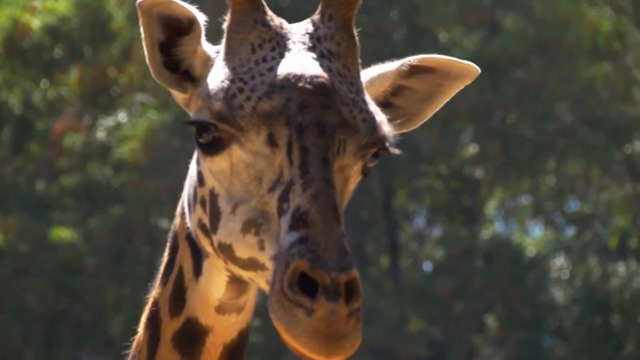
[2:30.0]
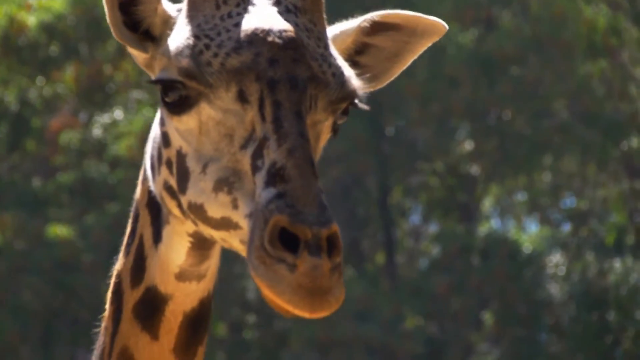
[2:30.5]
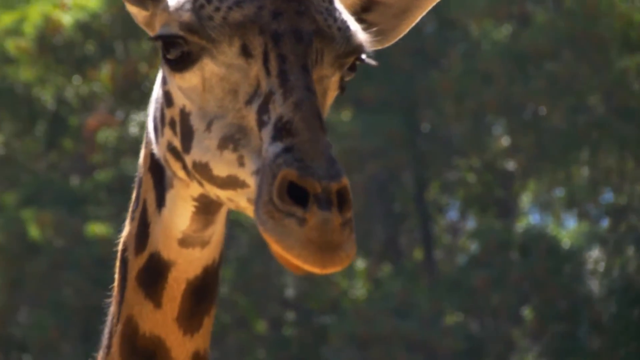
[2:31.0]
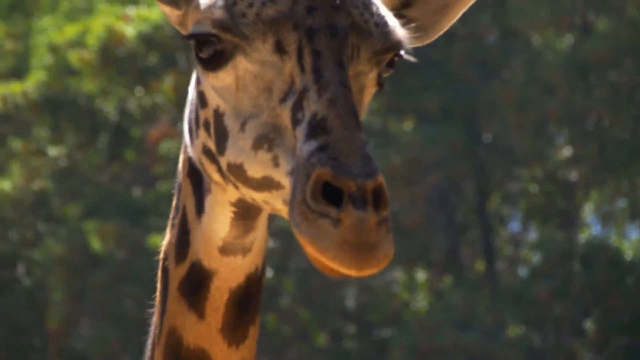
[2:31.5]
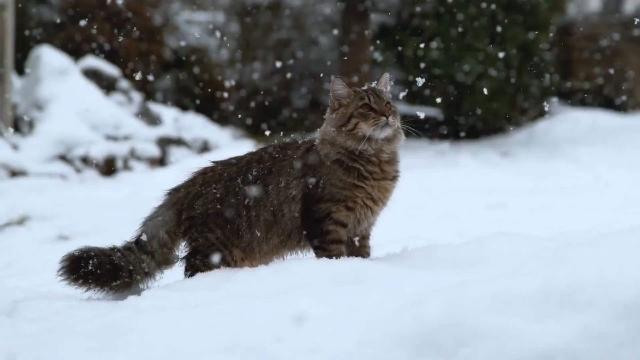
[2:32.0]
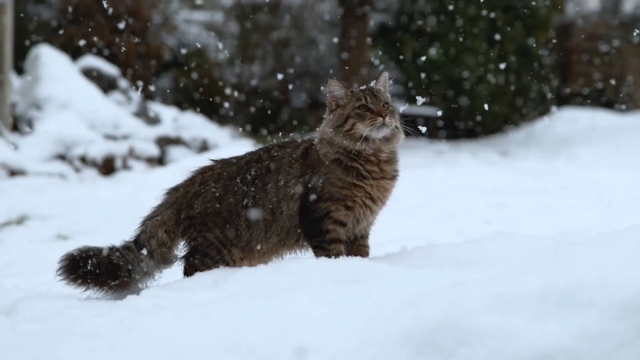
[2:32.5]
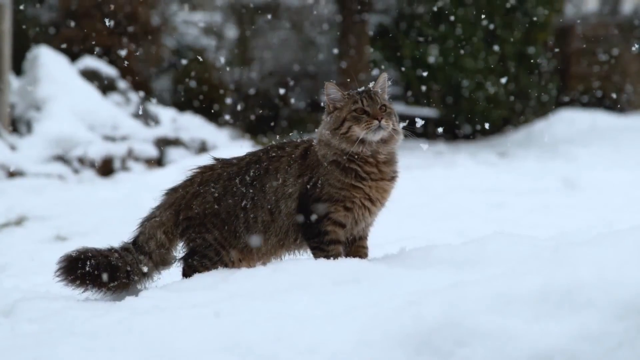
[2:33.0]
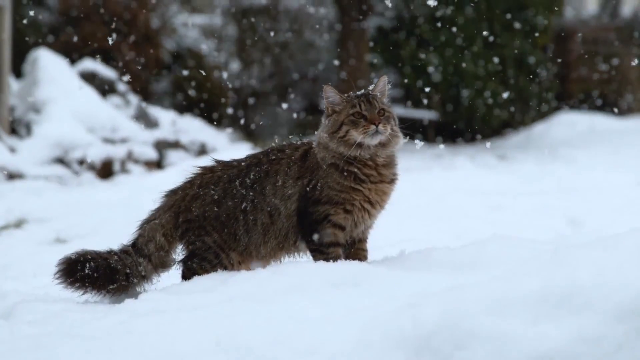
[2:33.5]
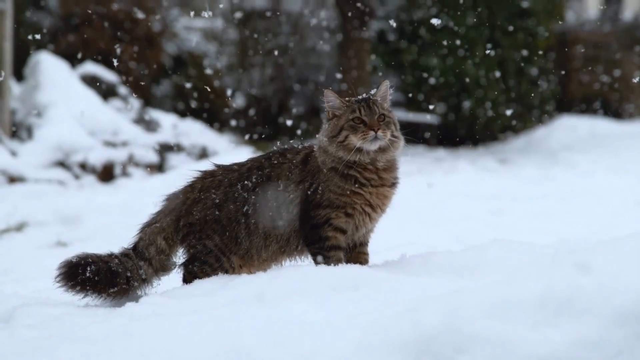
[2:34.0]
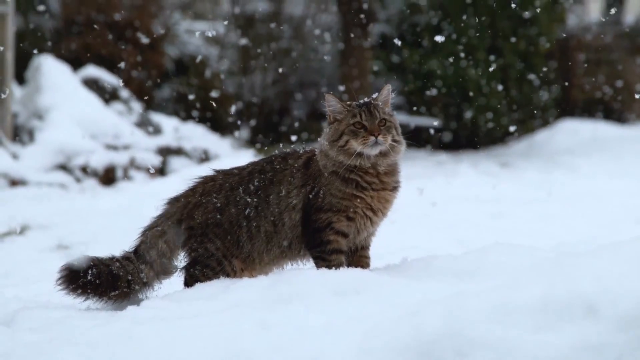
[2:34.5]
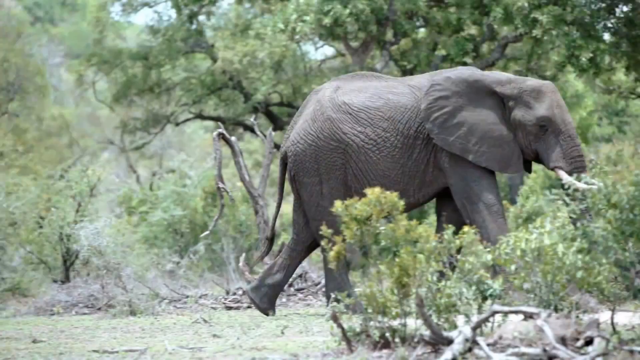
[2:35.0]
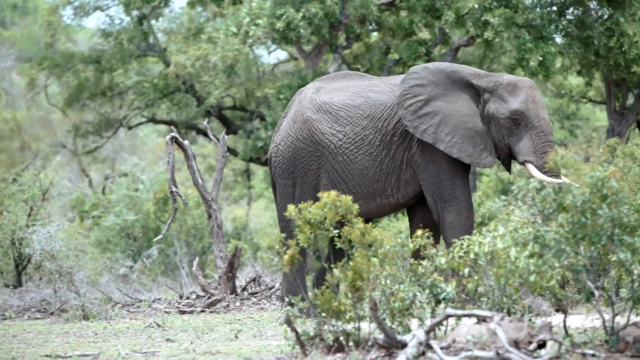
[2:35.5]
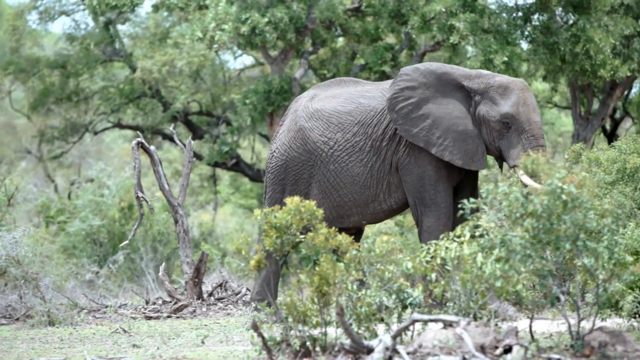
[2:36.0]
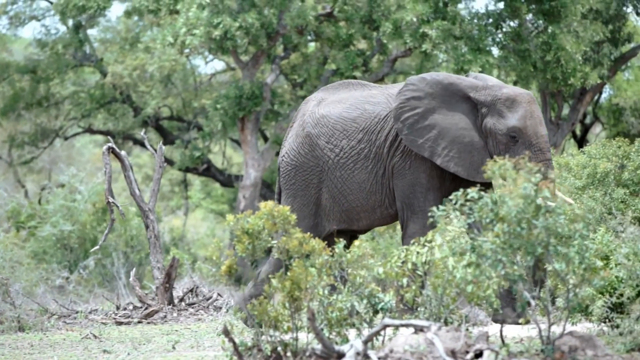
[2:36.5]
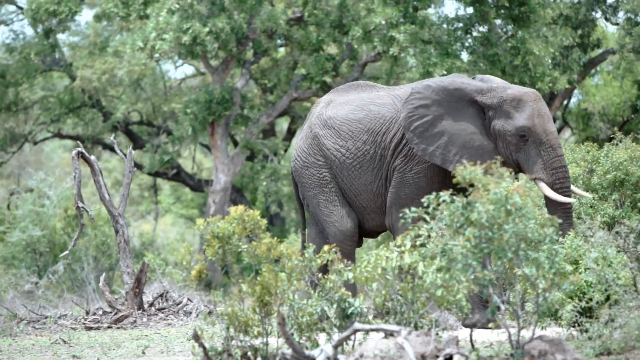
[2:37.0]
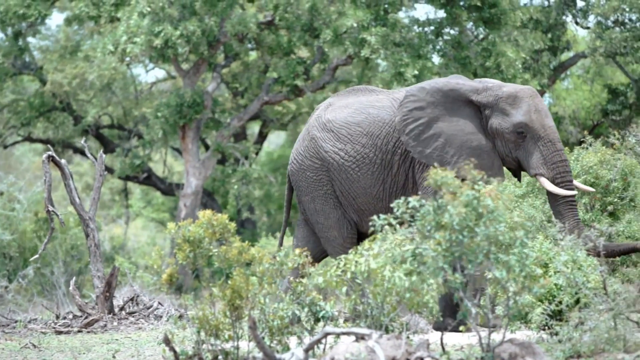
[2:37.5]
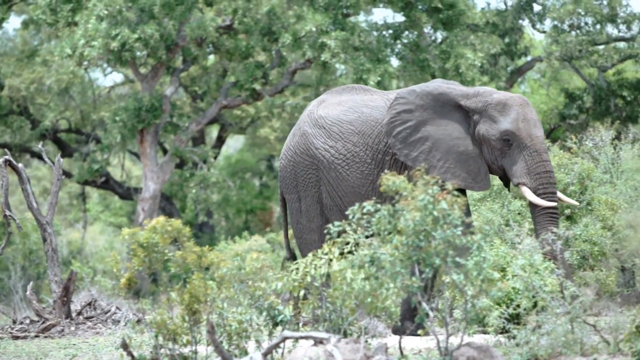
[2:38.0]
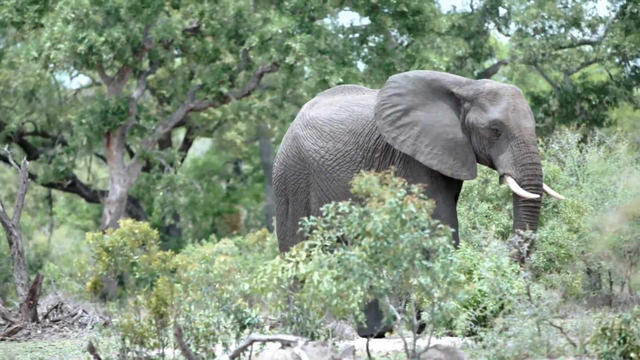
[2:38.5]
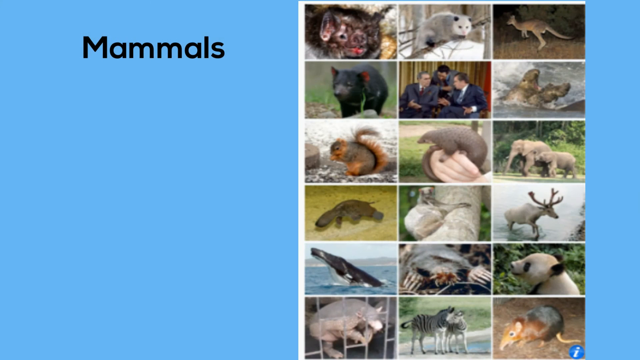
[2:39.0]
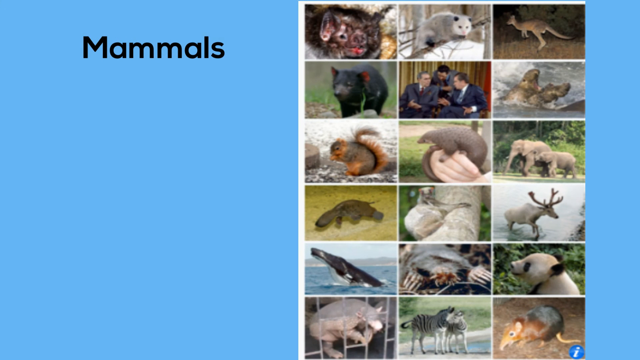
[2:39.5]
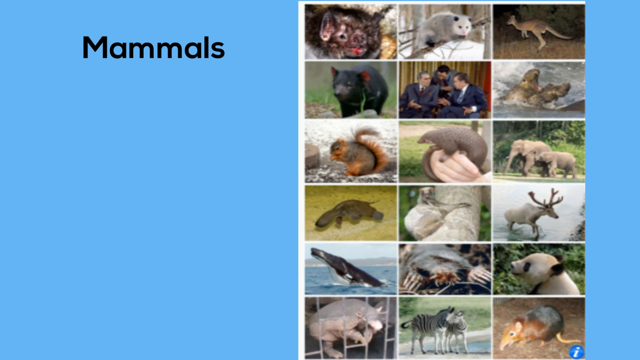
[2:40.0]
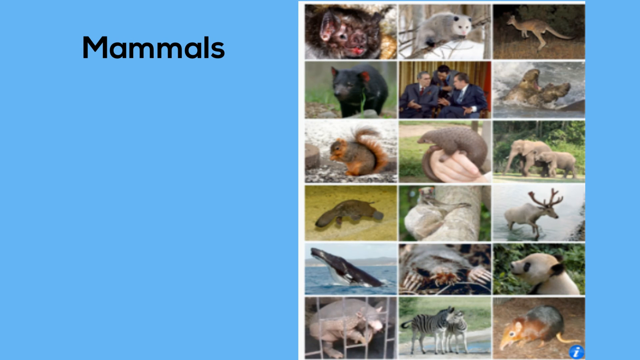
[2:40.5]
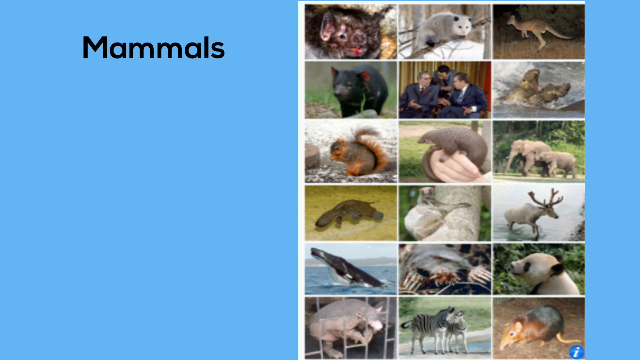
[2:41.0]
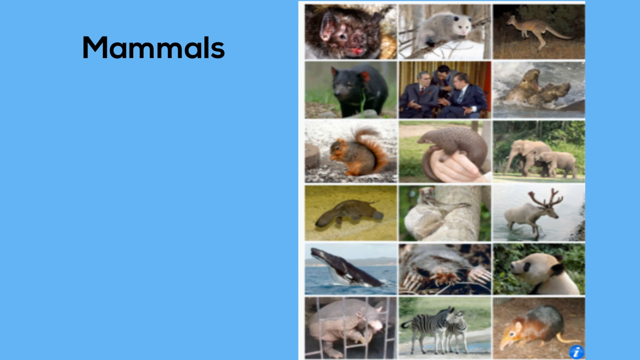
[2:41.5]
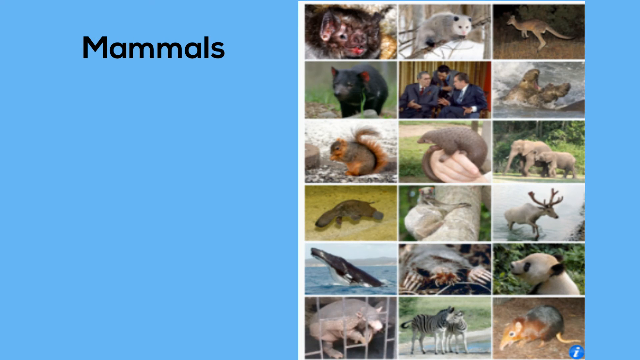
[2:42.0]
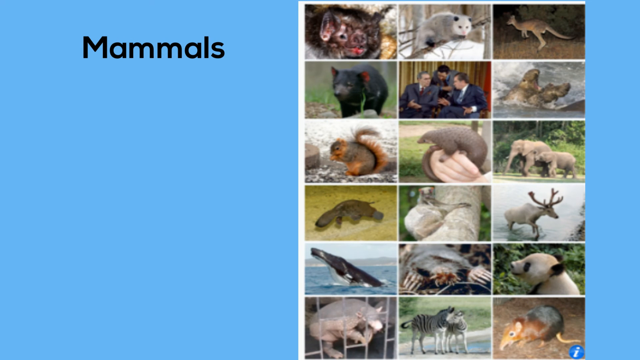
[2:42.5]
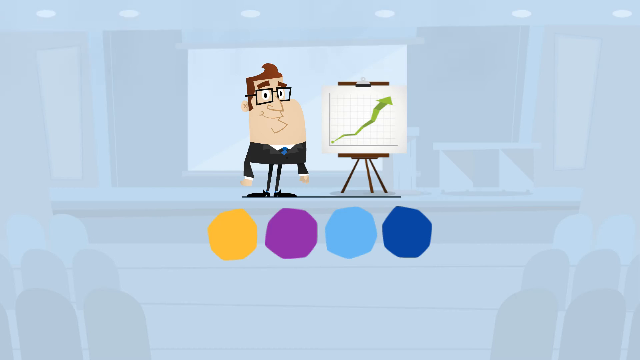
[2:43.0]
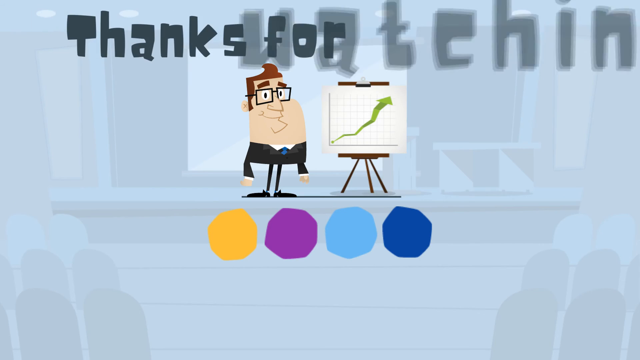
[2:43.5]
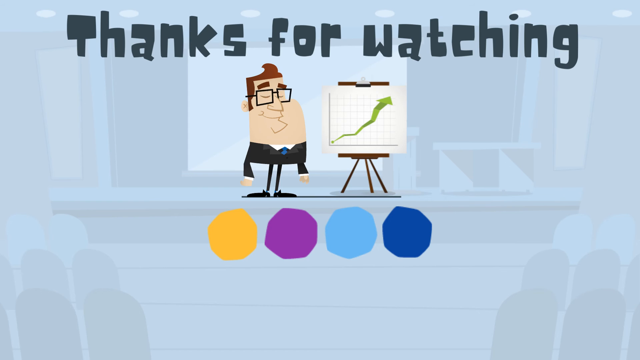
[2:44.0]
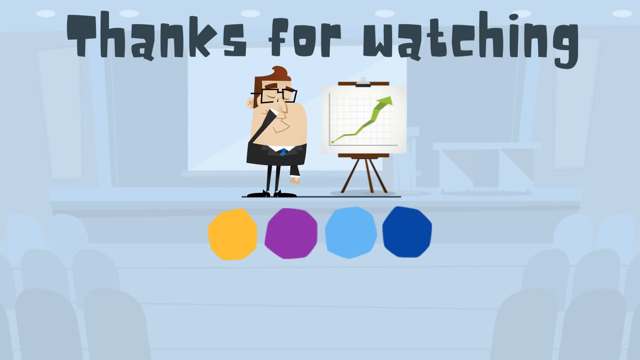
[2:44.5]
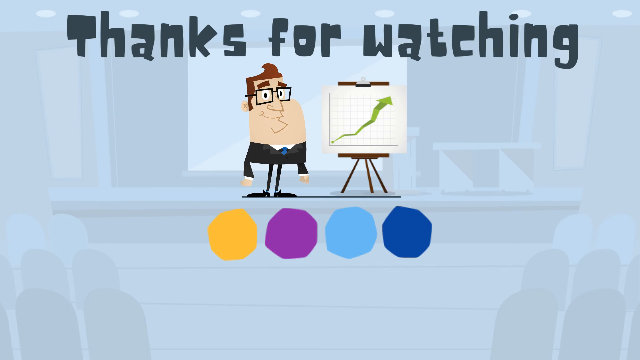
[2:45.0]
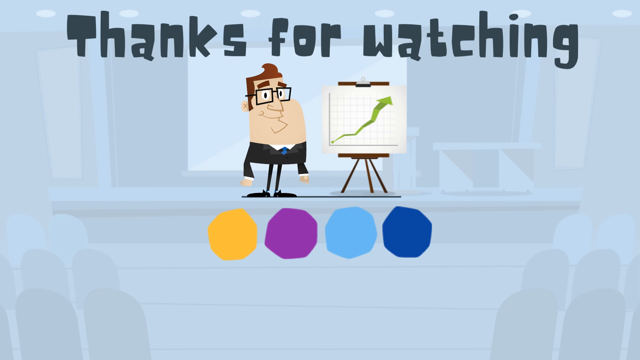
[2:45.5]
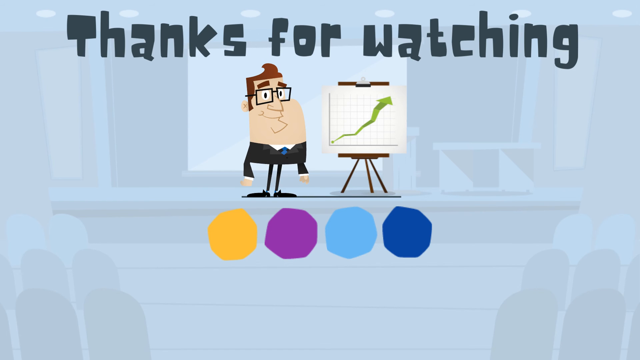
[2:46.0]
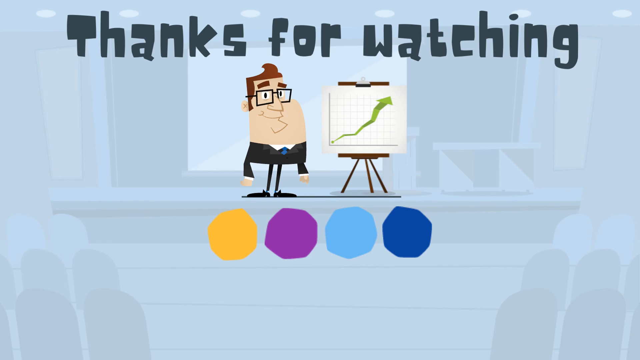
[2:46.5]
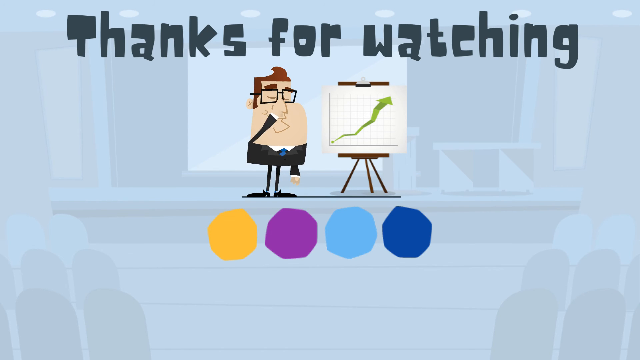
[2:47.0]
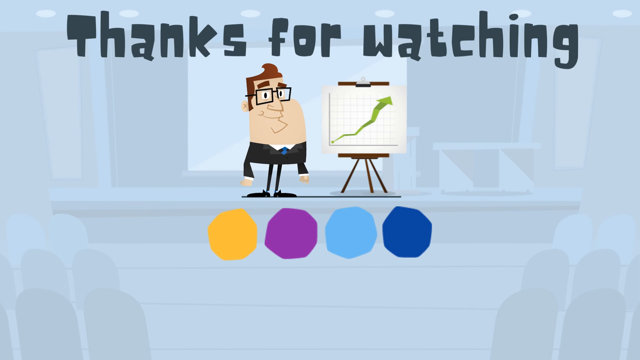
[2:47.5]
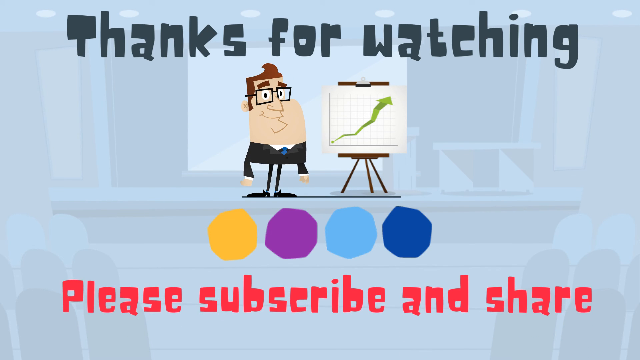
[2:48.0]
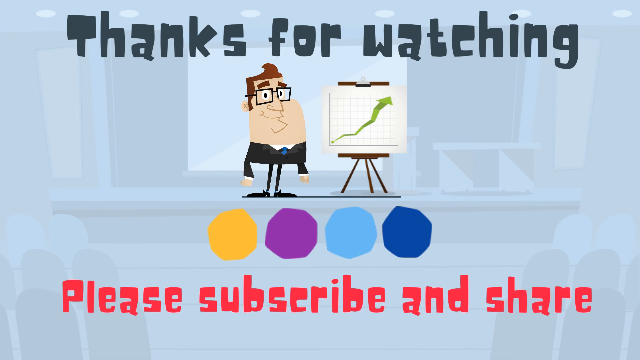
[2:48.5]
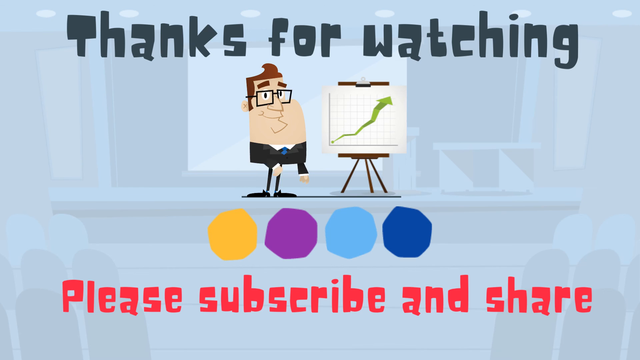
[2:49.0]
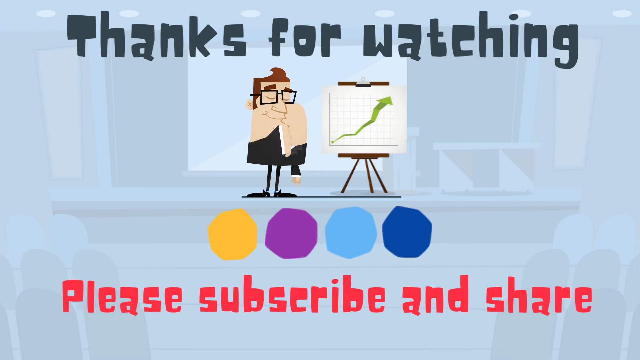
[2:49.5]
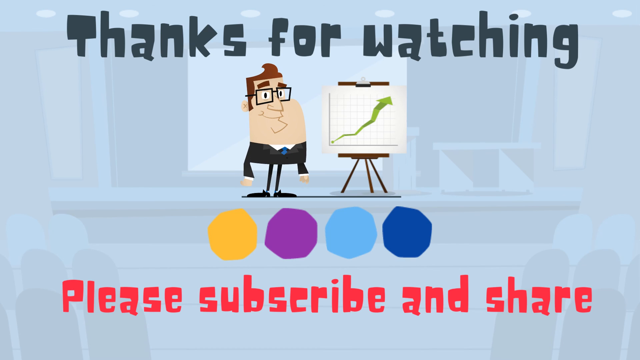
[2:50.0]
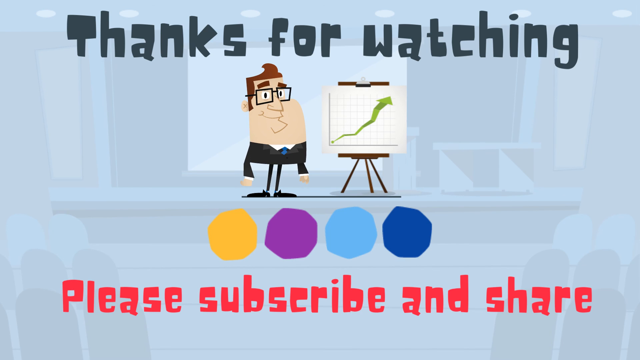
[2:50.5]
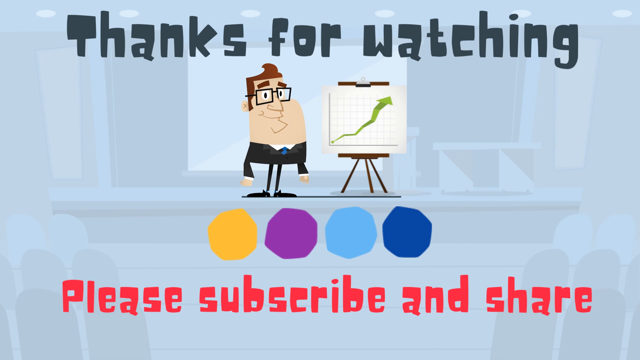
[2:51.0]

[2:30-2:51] A brown and black cat is outside, surprised by the falling snow. A lion walks alone in a forest. An elephant seems to walk through a dry area. Other mammals are shown on a presentation board, and then the screen says "thank you".